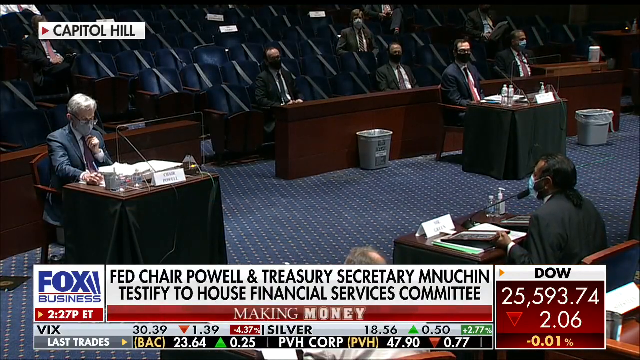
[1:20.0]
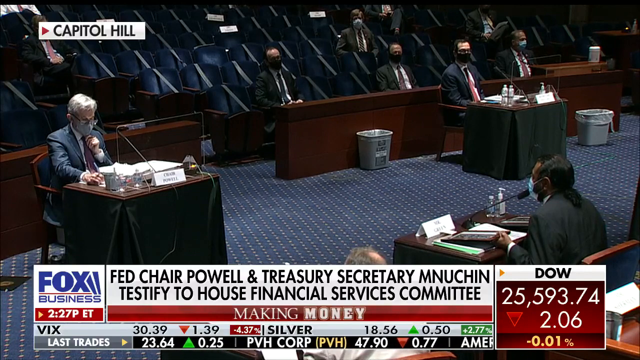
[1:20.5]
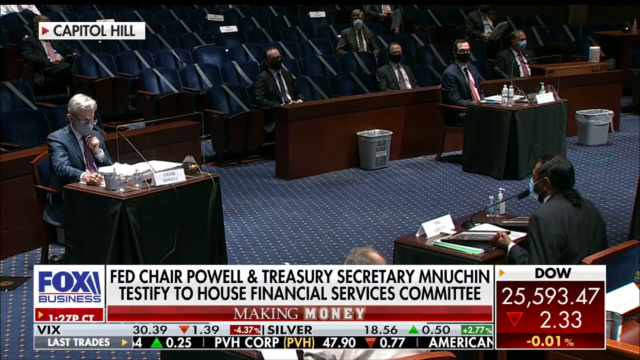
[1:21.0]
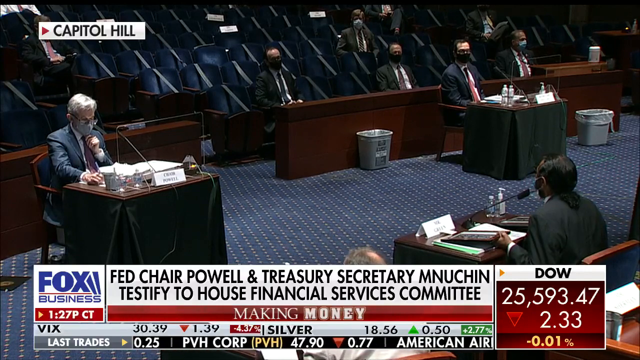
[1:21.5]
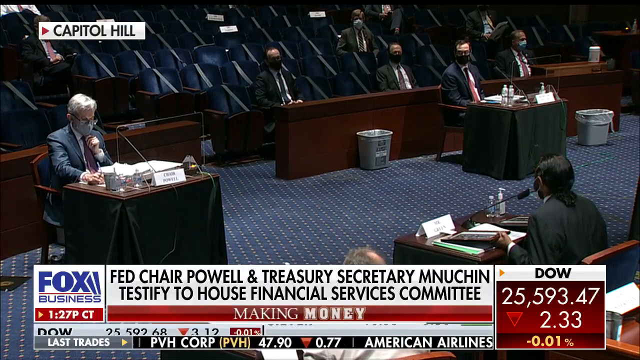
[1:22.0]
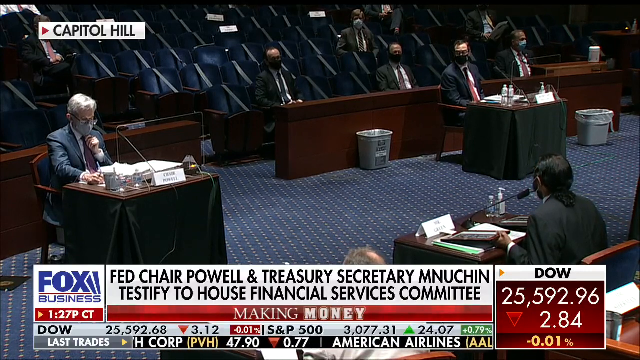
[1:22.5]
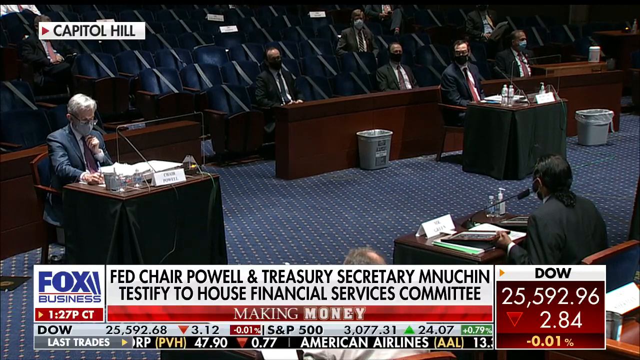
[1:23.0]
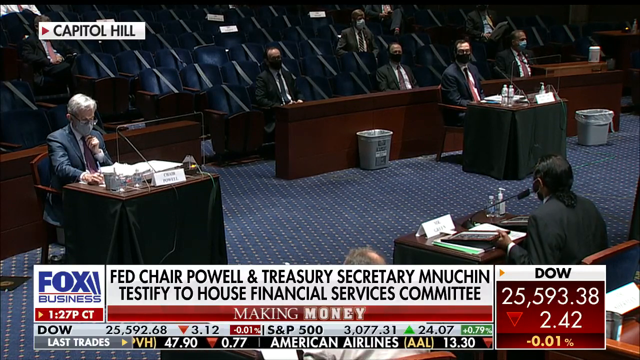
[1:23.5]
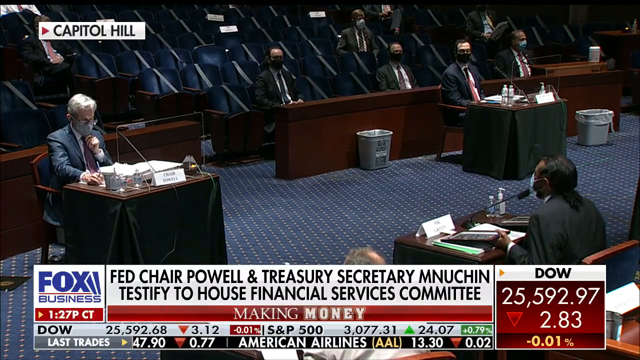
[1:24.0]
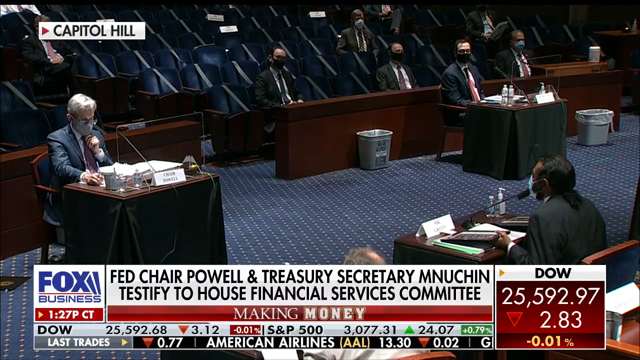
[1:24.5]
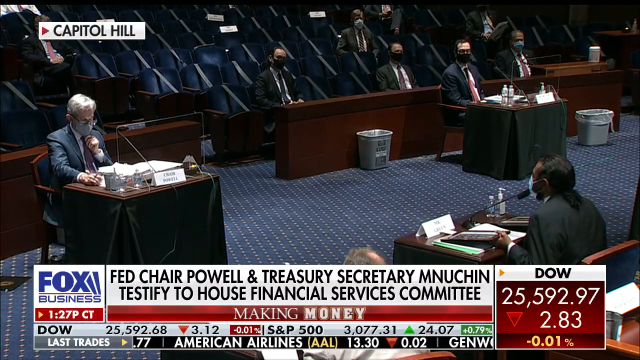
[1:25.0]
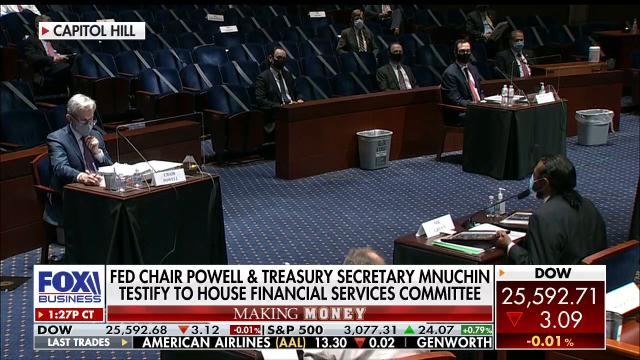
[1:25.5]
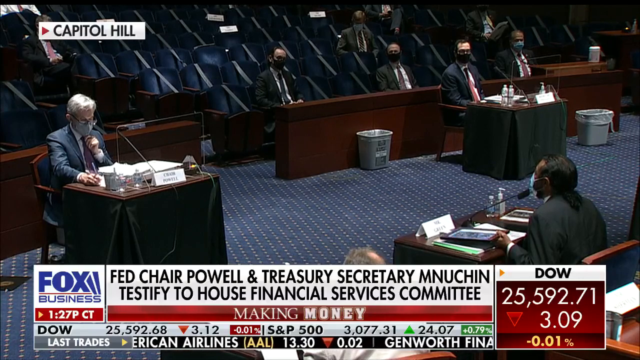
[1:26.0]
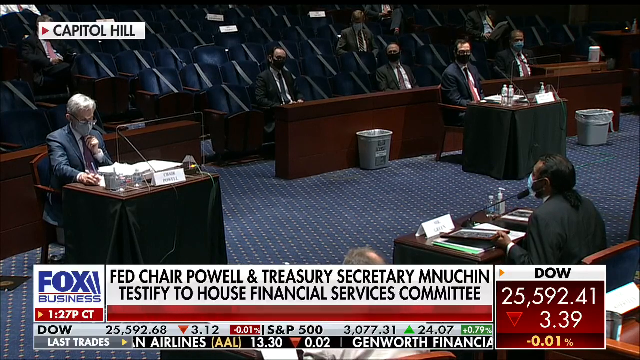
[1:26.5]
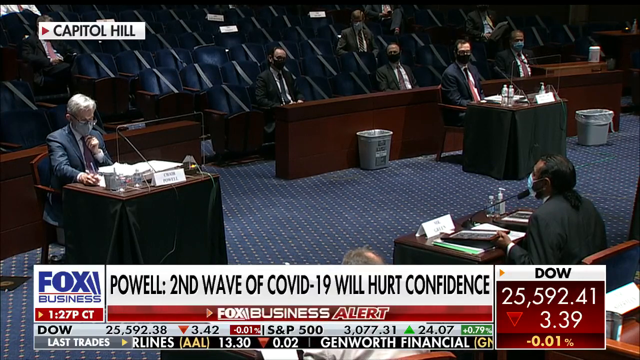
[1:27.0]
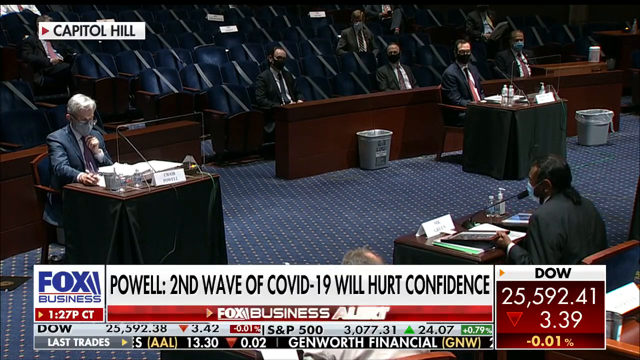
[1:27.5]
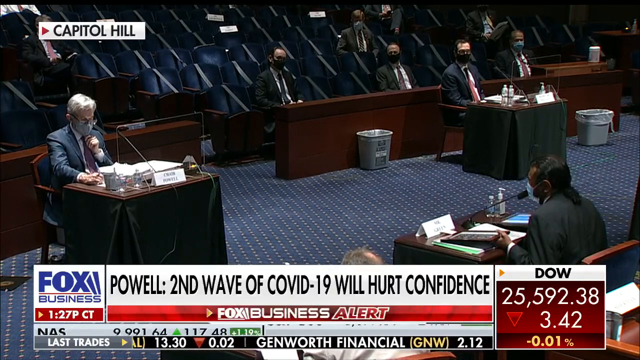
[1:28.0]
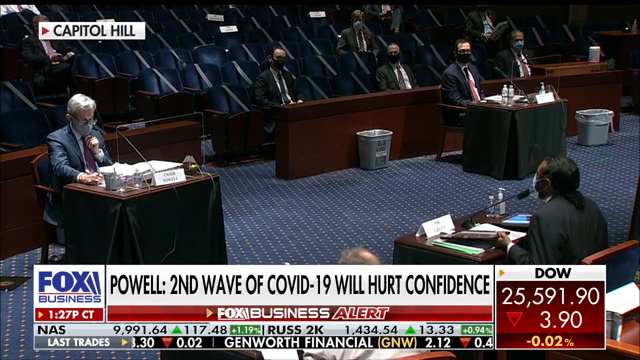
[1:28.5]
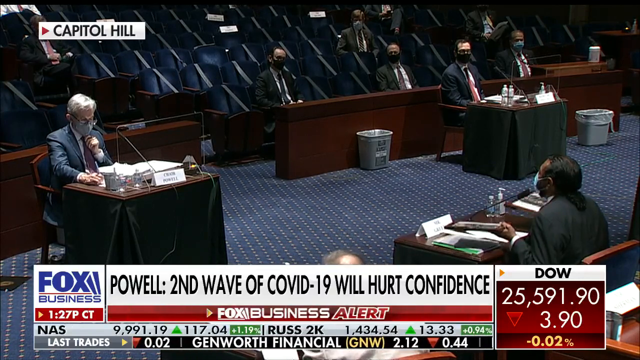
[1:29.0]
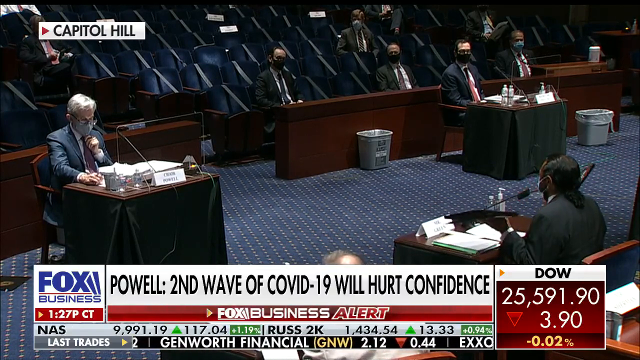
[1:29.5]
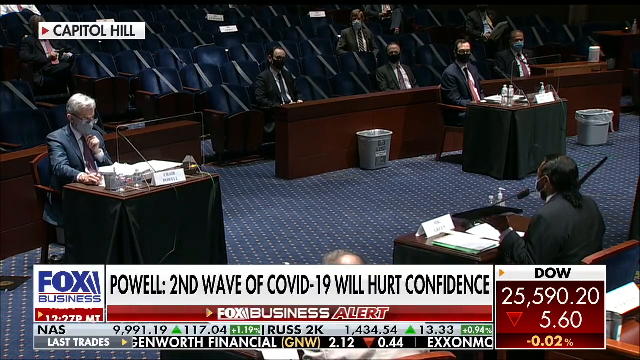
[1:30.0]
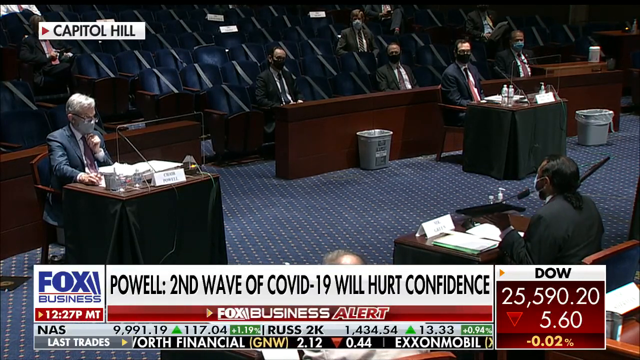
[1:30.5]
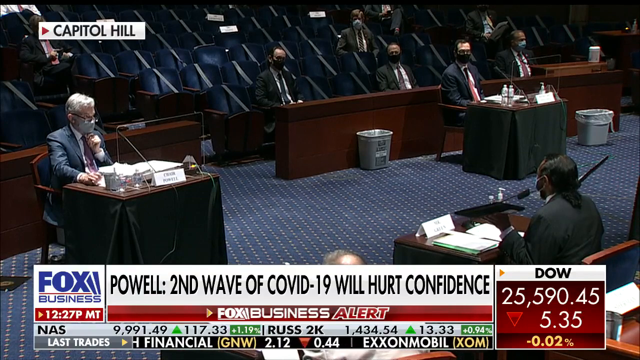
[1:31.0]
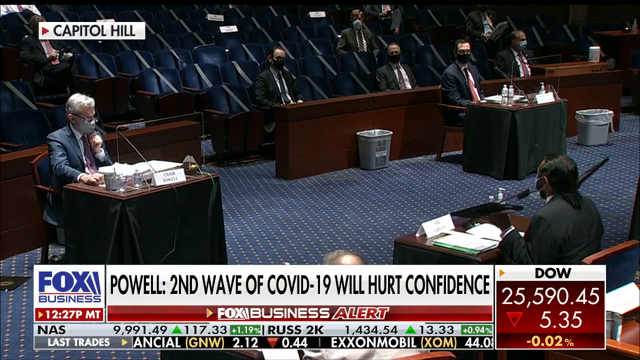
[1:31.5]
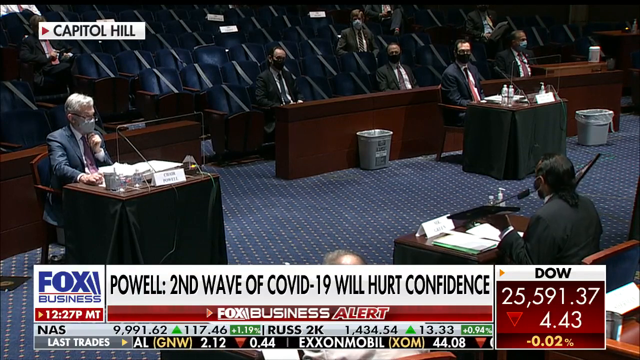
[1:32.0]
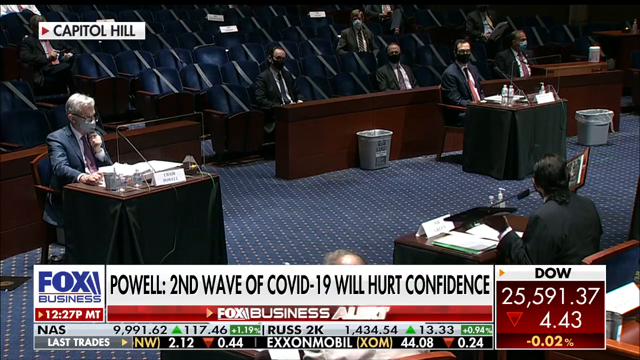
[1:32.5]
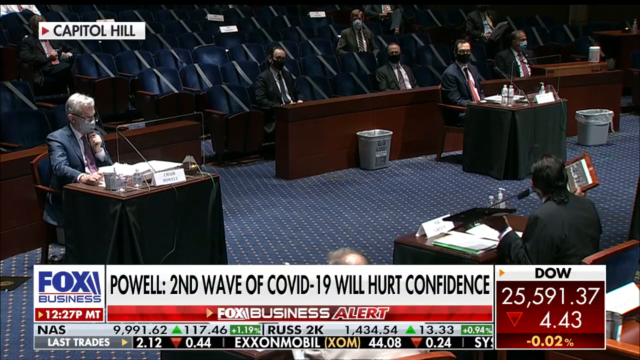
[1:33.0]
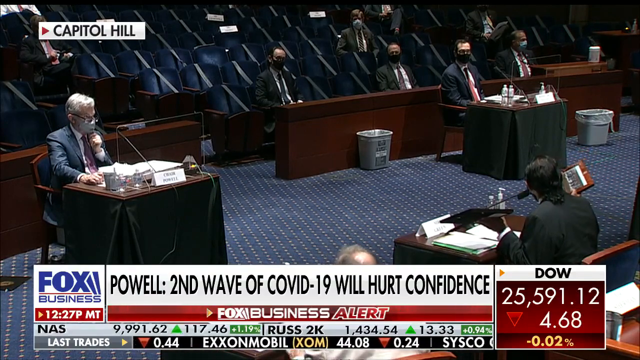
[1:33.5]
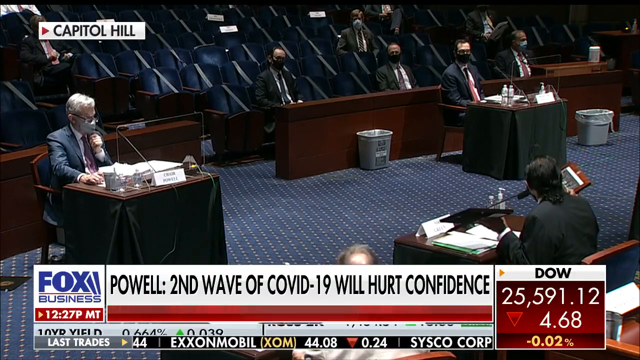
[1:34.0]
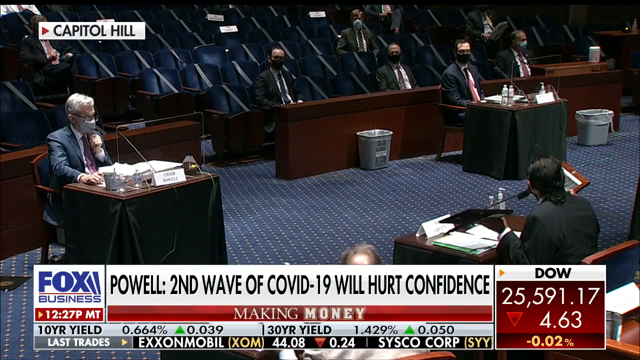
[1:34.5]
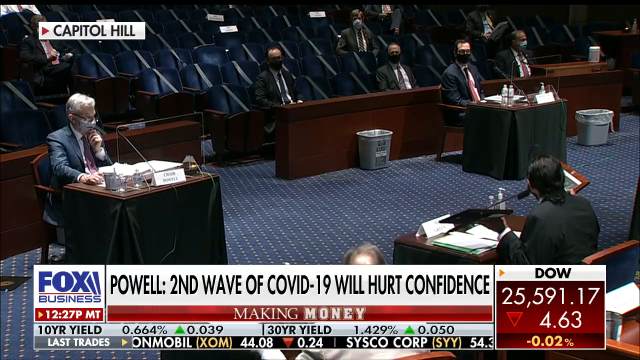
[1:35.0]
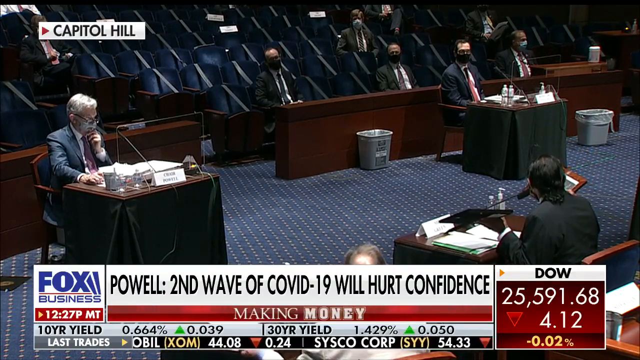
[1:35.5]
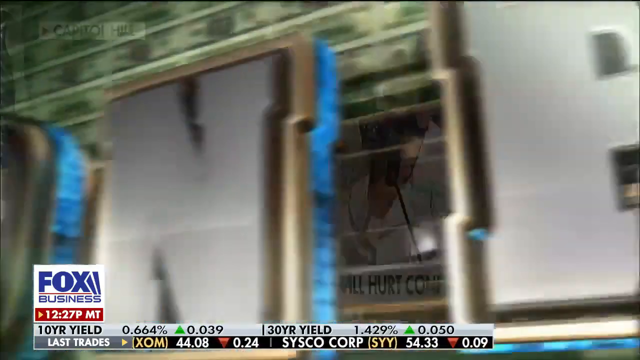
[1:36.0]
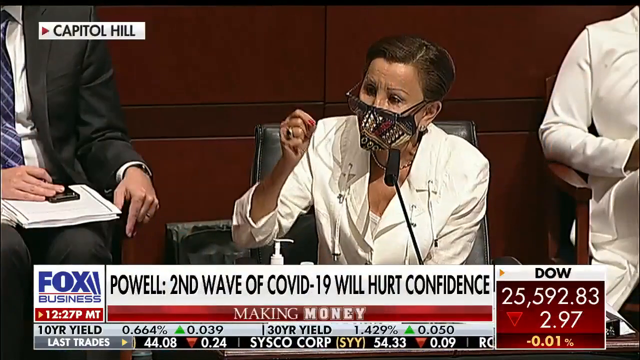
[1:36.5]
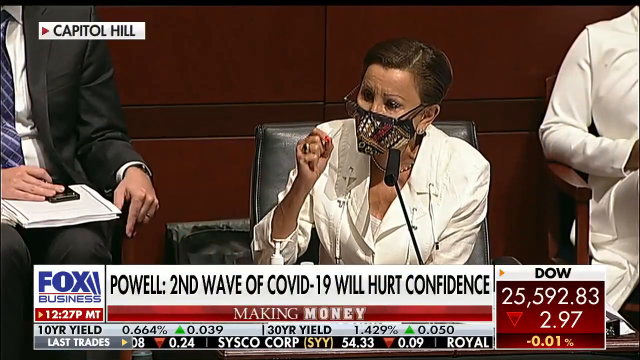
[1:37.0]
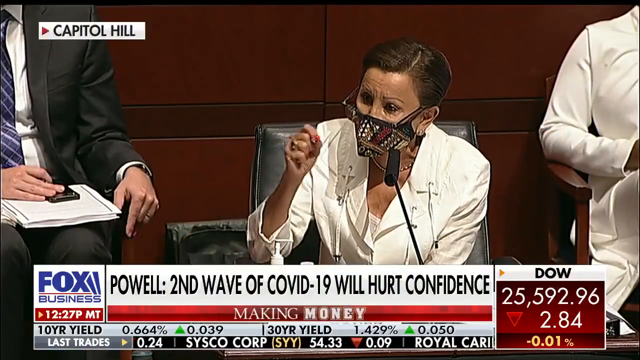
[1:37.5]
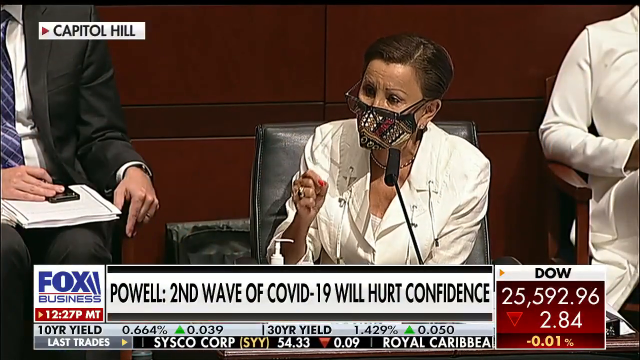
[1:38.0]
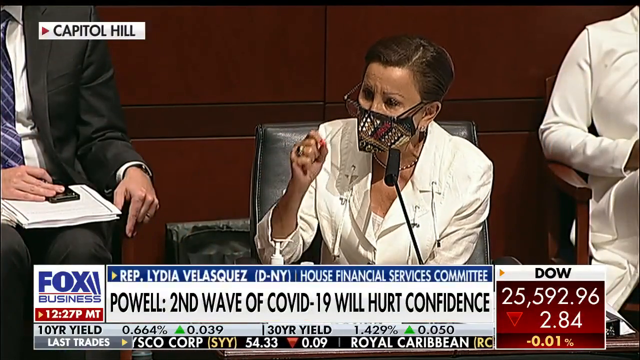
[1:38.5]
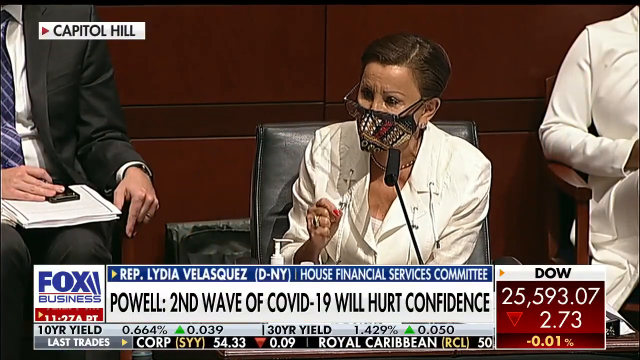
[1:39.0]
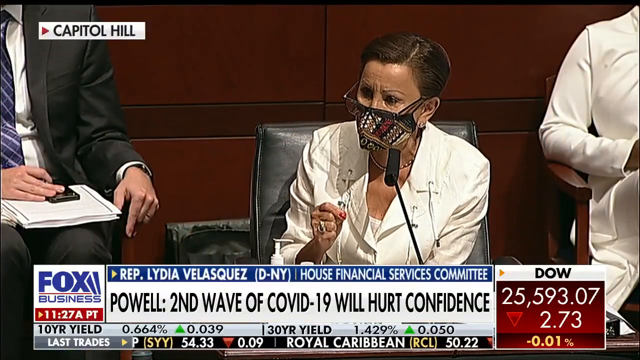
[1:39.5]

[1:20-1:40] The two sides are still talking face to face. Mnuchin talks in front of a man with white hair, a blue suit, a purplish-pinkish tie and a white shirt. The video transitions to a woman wearing a mask and glasses, with the text "Powell, second wave of COVID-19 will hurt confidence". She wears a white blazer and a white undershirt and makes vigorous, forceful hand movements, appearing imposing and dominant. She seems to still be in Congress, or at a desk in a meeting in some sort of important place.